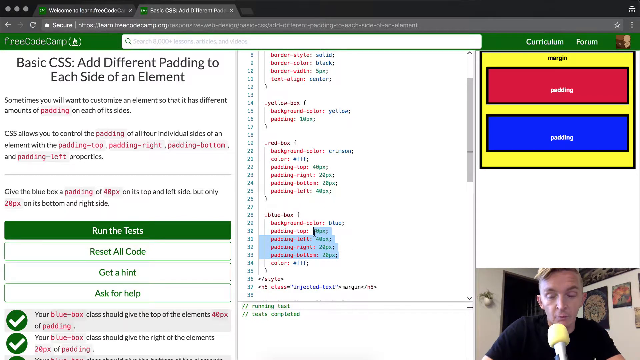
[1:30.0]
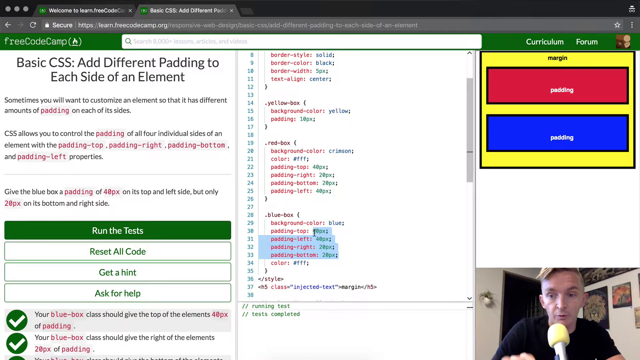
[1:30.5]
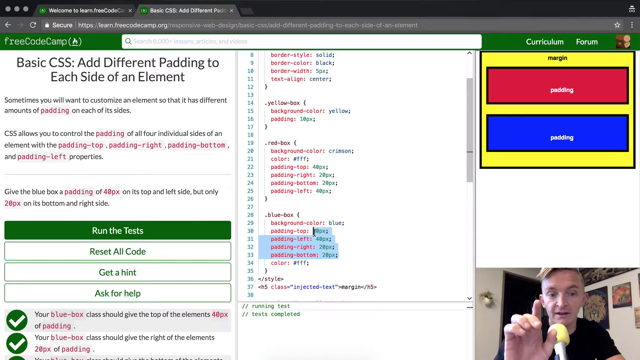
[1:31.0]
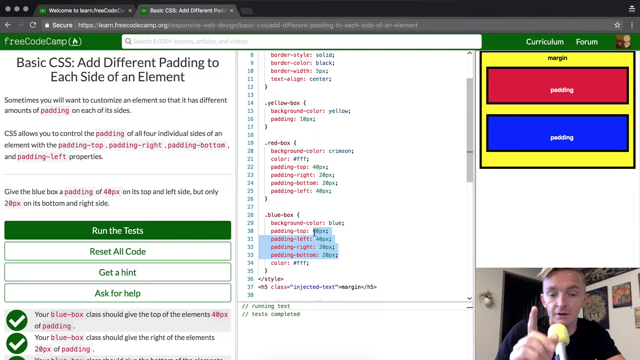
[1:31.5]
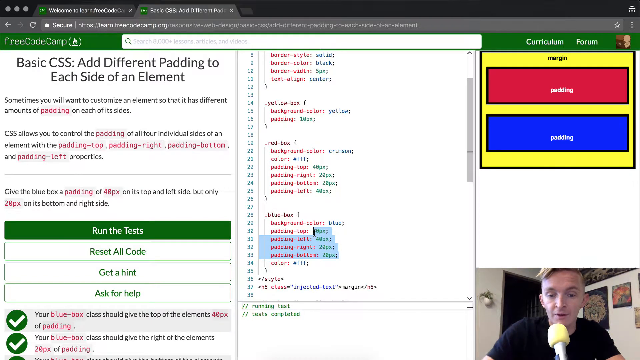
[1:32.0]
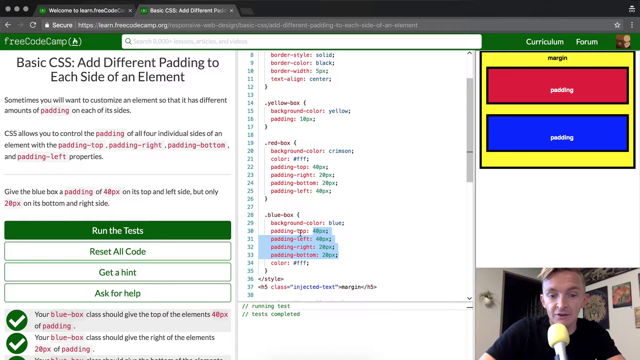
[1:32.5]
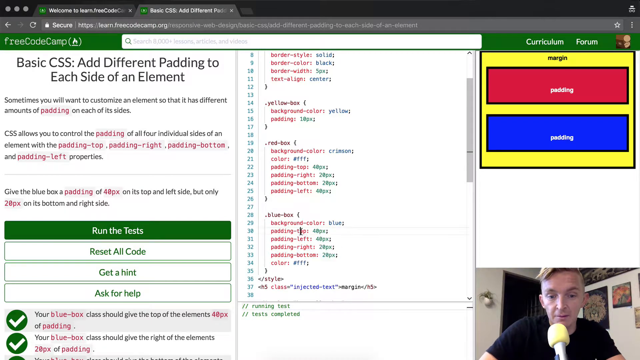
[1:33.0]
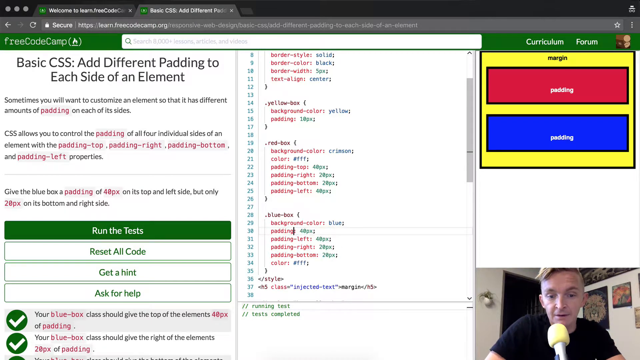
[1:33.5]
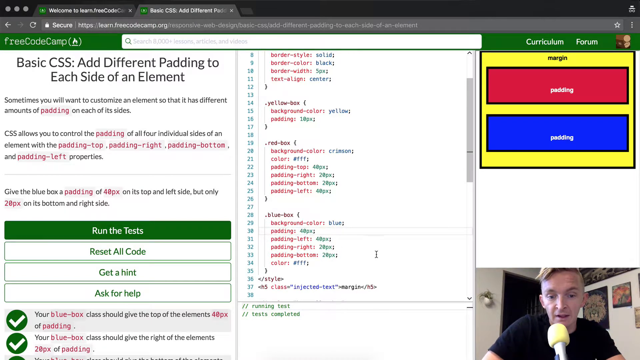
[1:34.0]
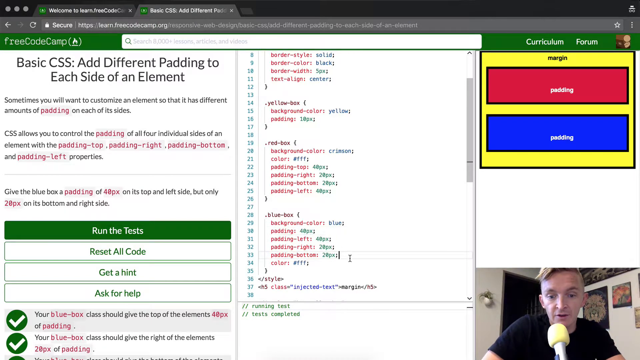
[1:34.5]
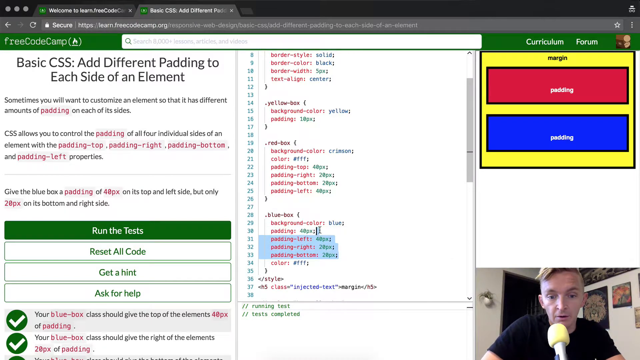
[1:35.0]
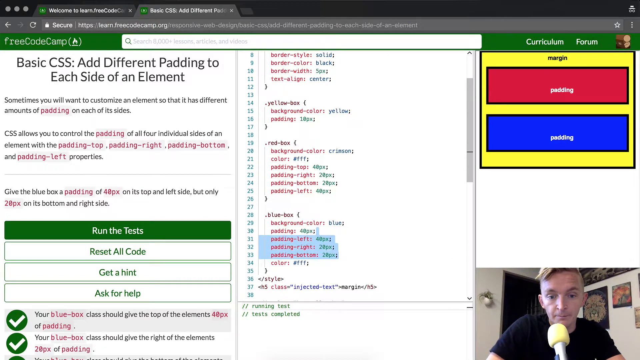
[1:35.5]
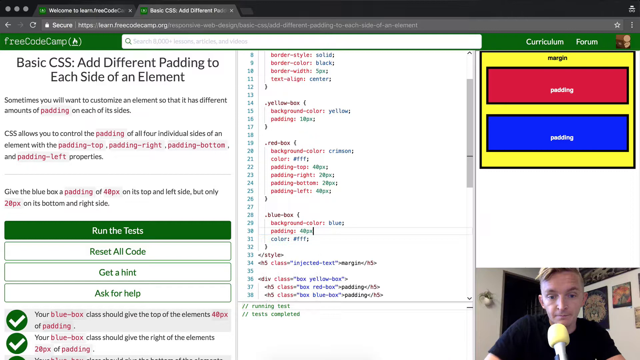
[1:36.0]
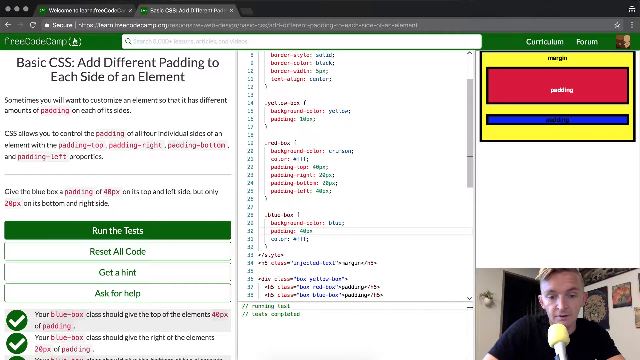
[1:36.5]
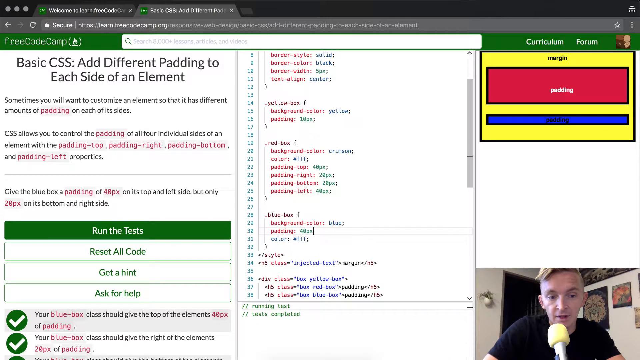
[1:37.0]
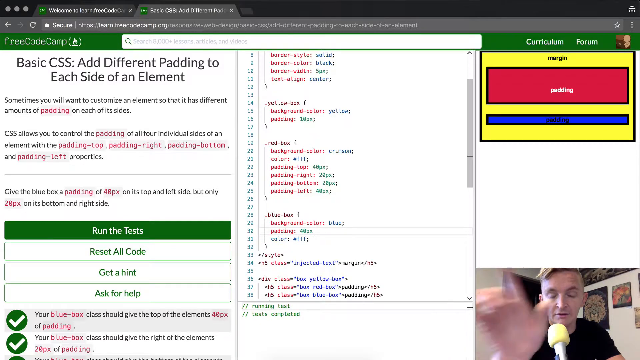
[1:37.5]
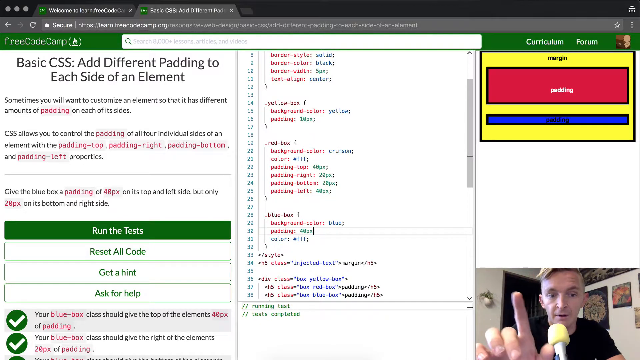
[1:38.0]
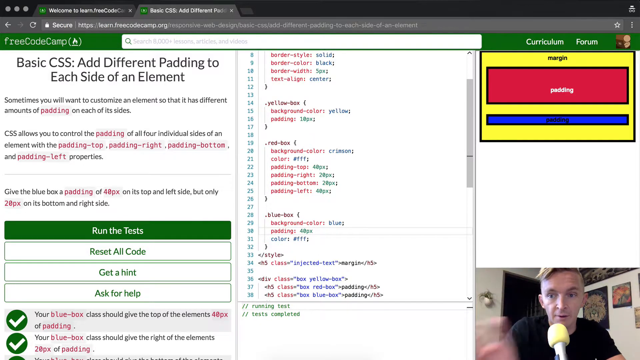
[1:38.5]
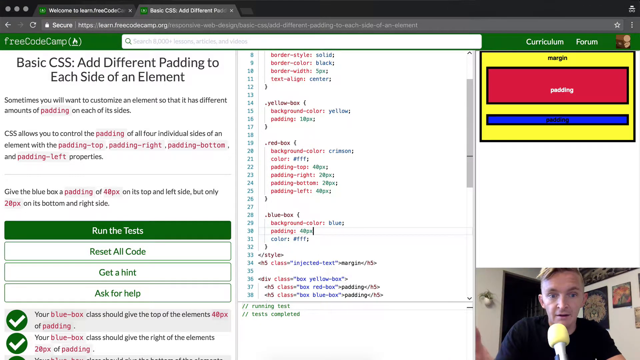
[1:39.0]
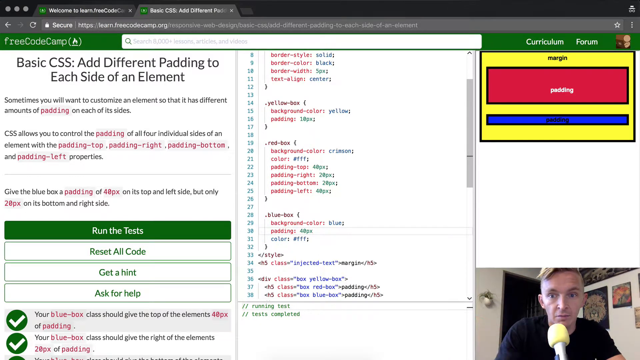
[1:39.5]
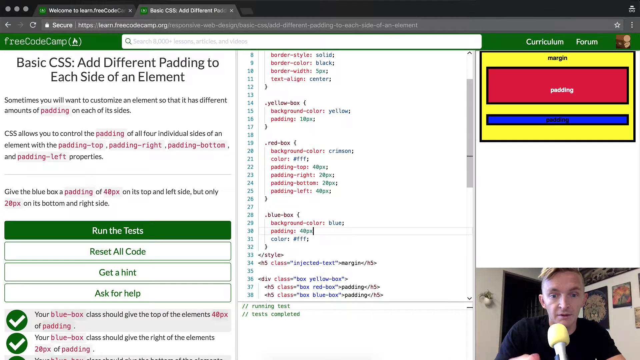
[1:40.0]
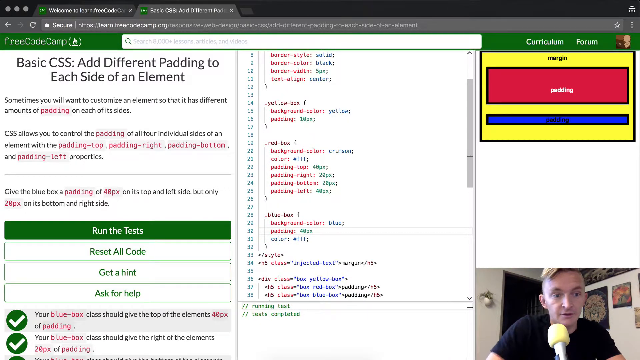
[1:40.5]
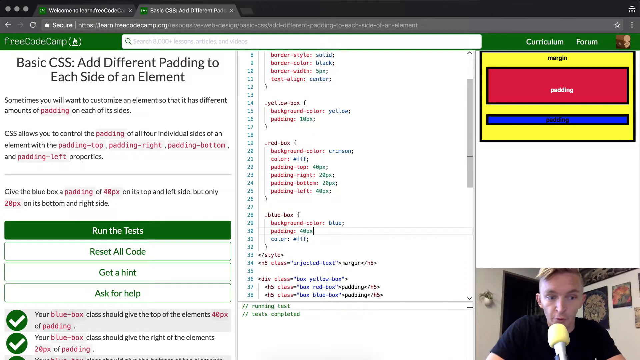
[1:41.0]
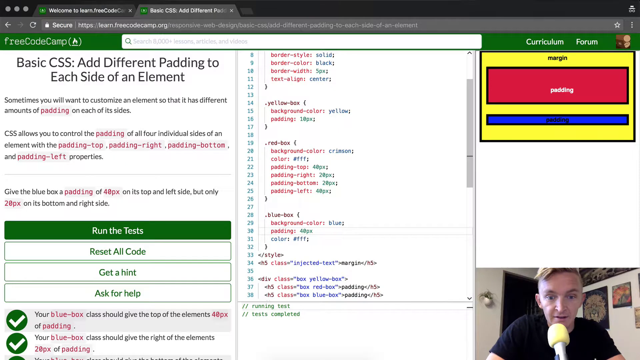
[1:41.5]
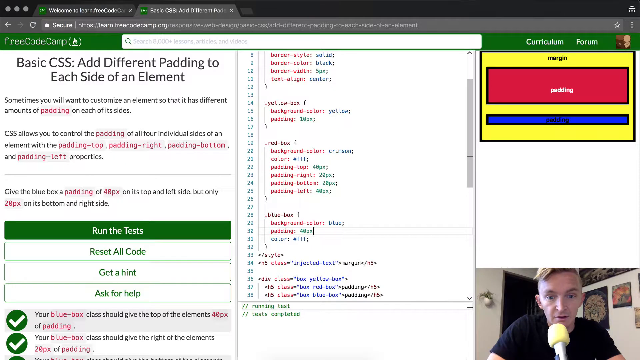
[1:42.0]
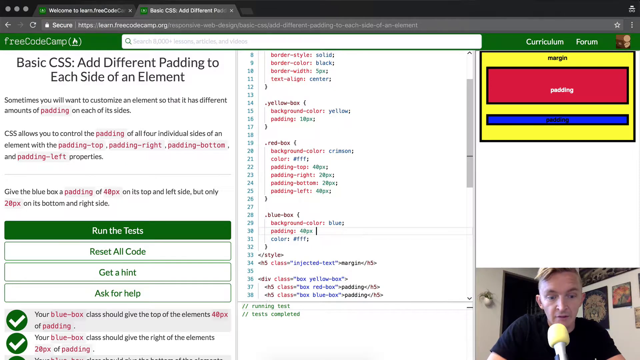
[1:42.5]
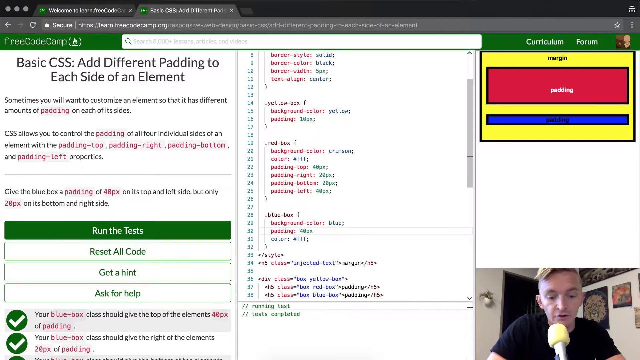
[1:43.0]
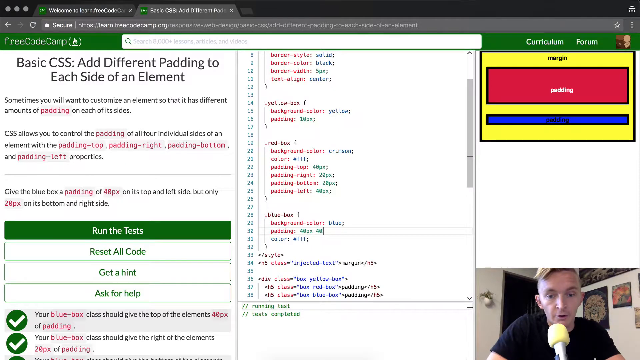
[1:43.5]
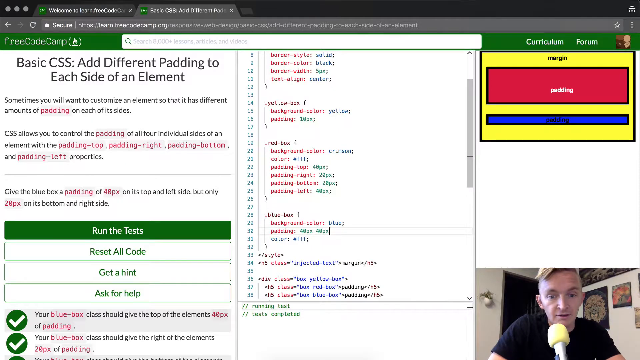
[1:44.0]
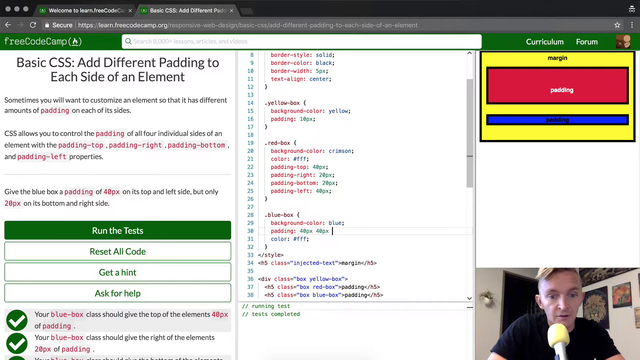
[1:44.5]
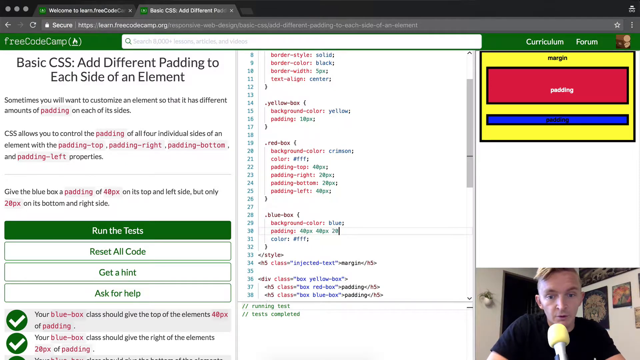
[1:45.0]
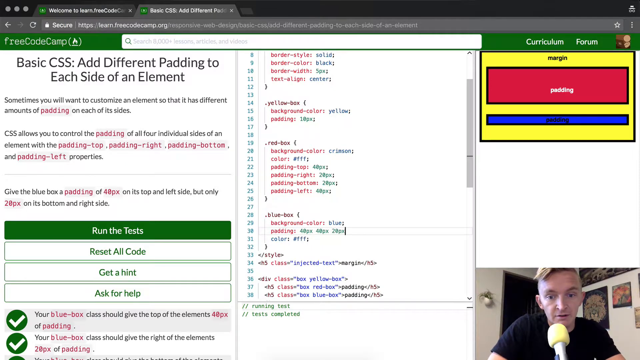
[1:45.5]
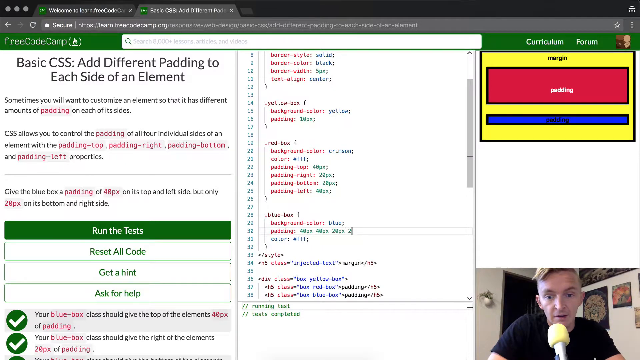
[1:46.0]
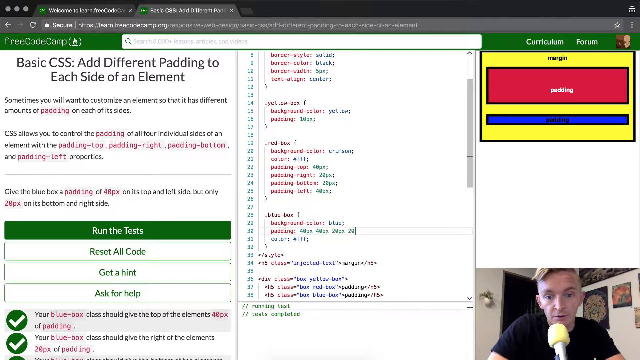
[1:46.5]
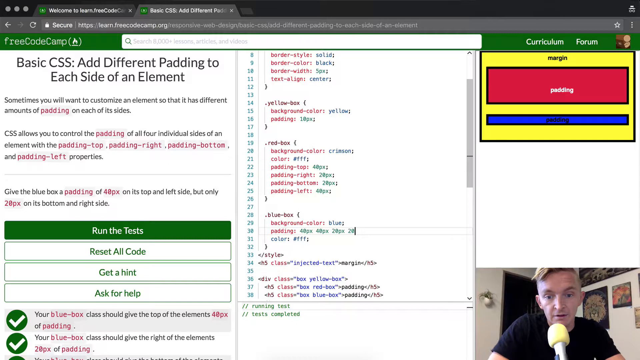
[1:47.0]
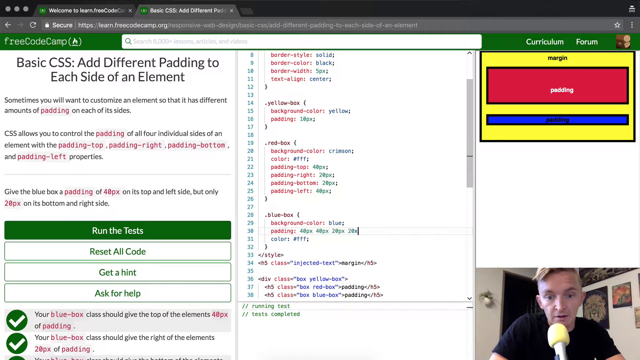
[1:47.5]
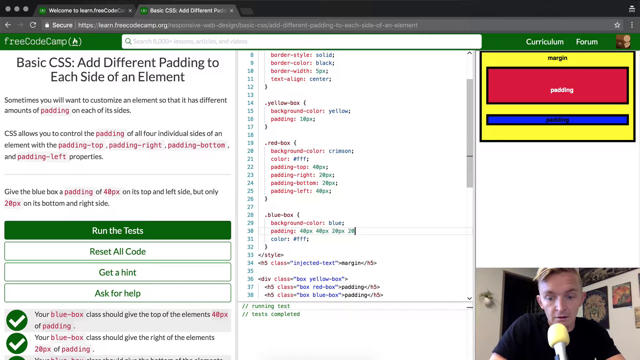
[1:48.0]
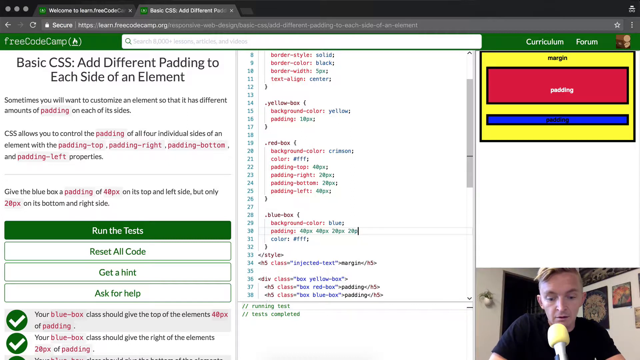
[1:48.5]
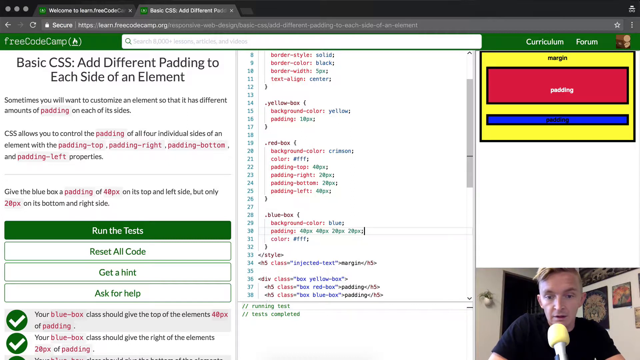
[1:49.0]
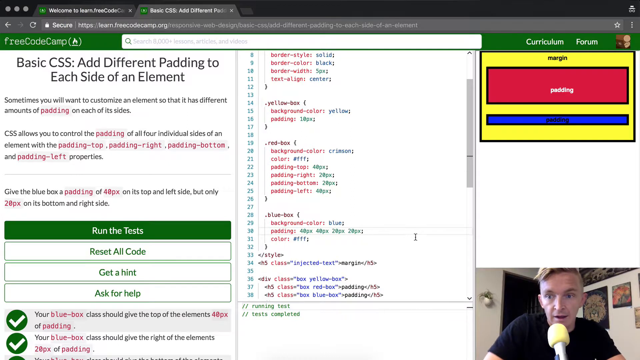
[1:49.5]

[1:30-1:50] The instructor lifts his hand and points his finger toward the ceiling, then lowers it and works on the code again. He highlights a big section, deletes some code and changes a parameter, and the padding in the top right returns to how it was at the beginning, undoing what he had just added. He lifts his hand again, then adds new parameters to the code in the center of the page, his cursor moving as he makes the changes.